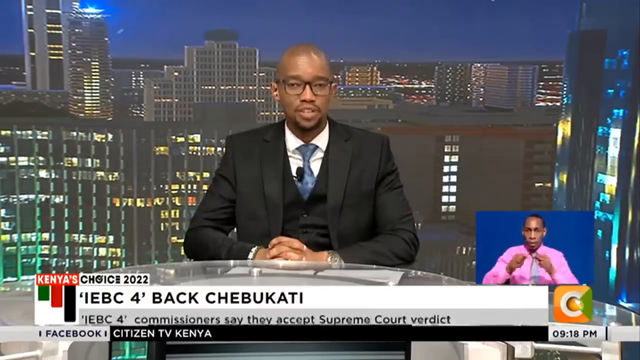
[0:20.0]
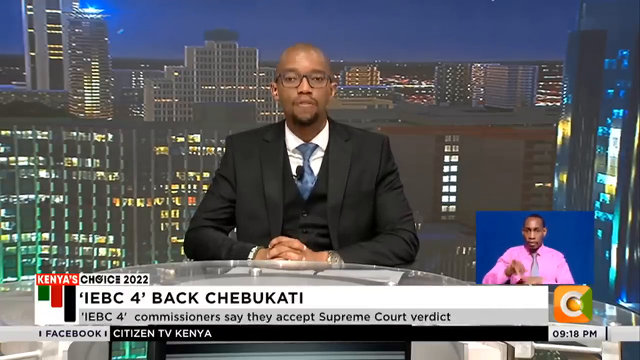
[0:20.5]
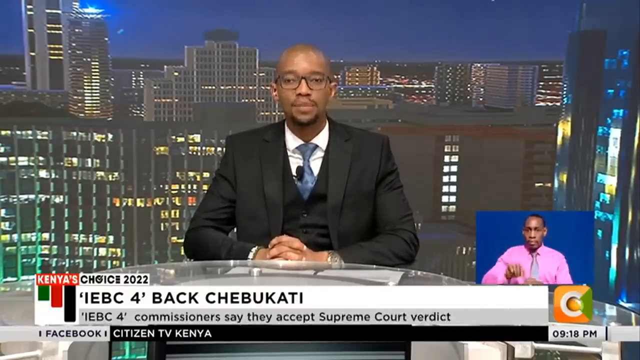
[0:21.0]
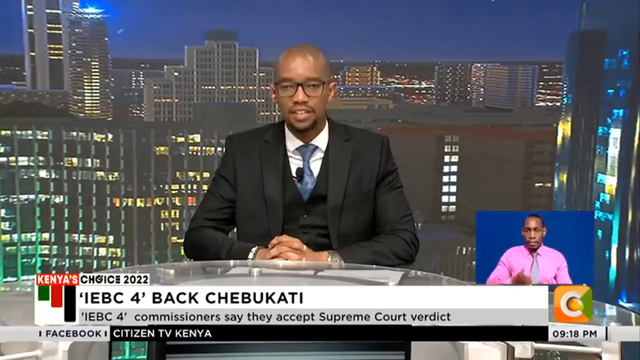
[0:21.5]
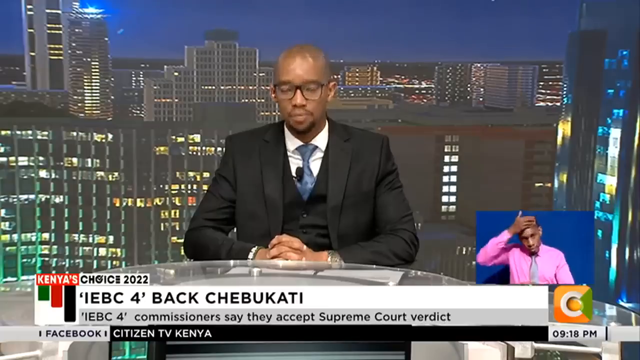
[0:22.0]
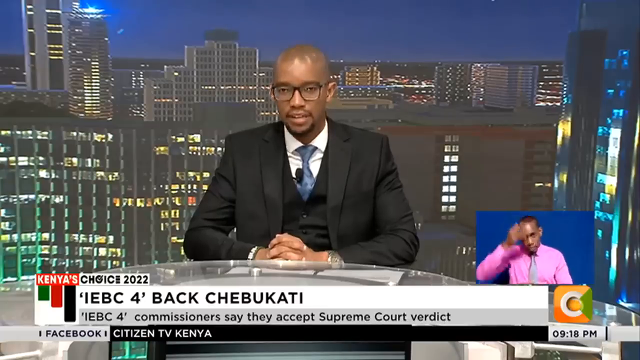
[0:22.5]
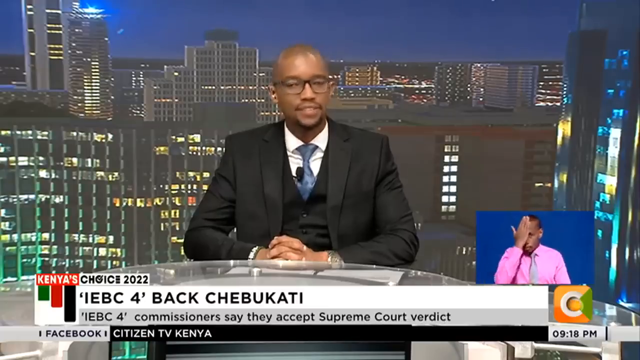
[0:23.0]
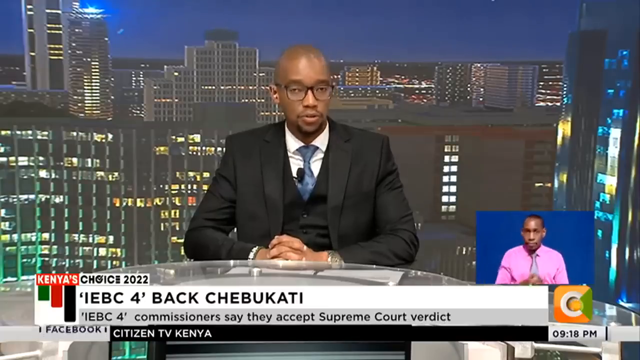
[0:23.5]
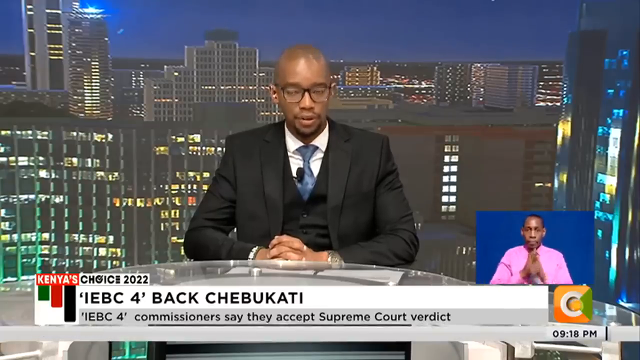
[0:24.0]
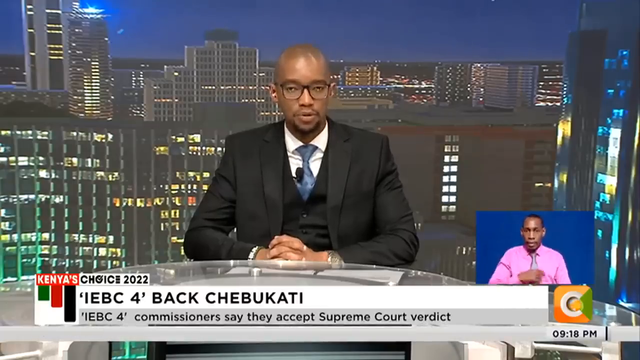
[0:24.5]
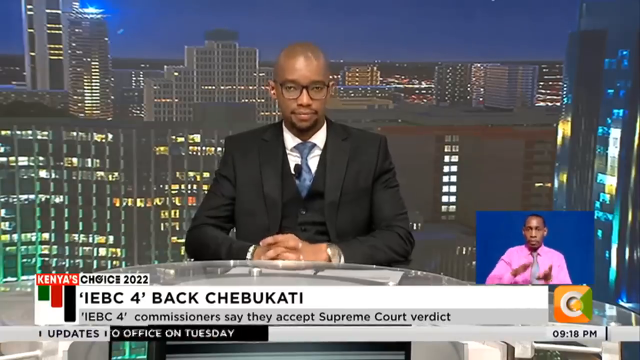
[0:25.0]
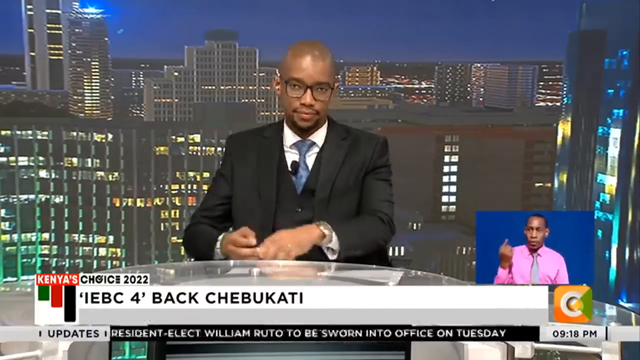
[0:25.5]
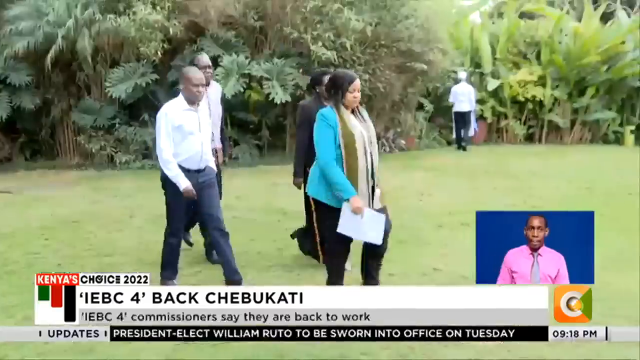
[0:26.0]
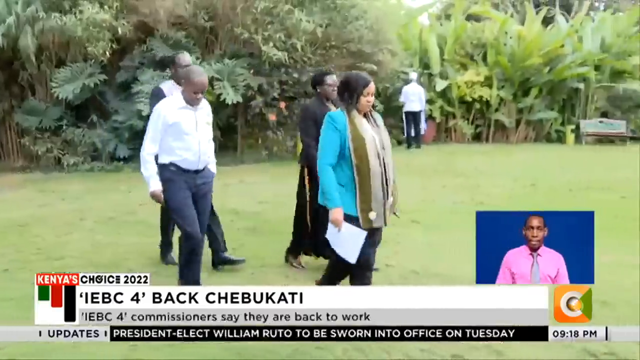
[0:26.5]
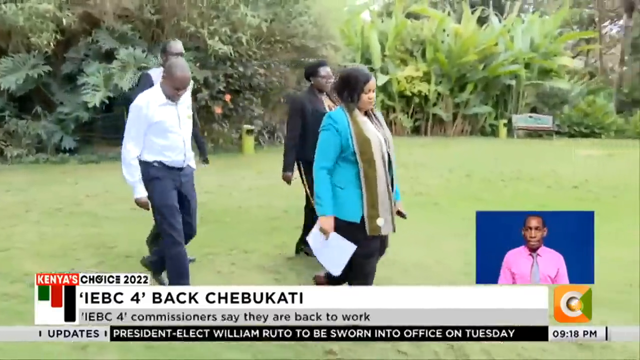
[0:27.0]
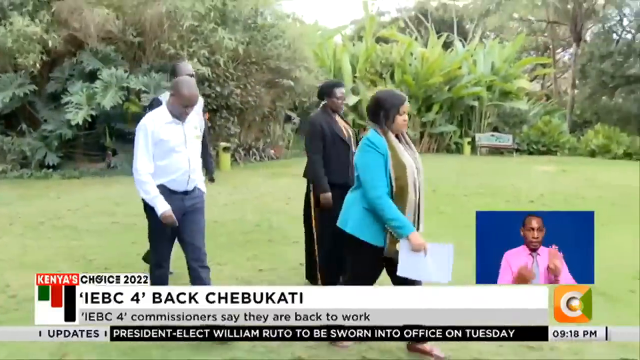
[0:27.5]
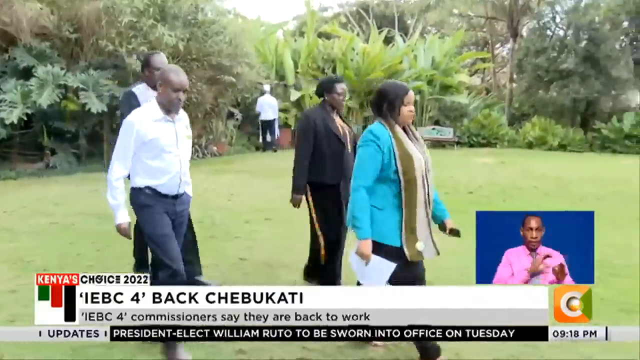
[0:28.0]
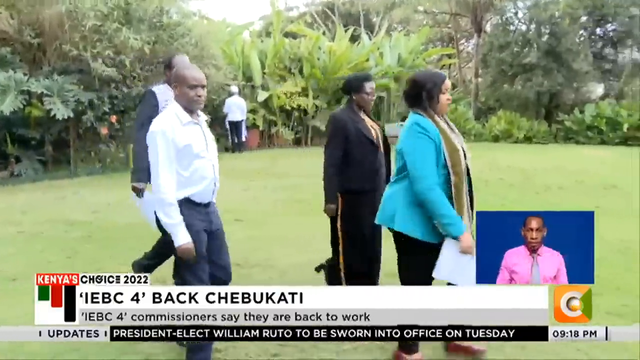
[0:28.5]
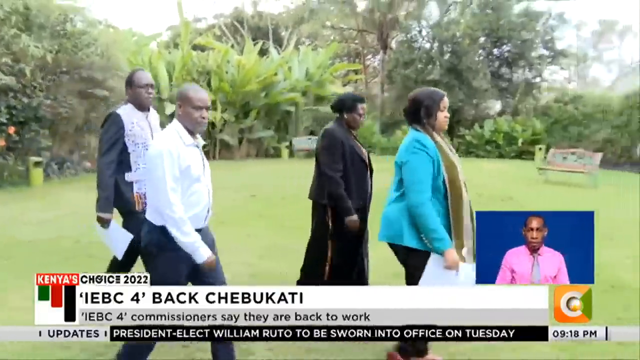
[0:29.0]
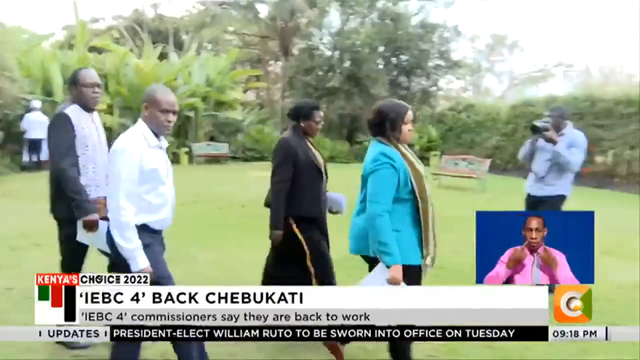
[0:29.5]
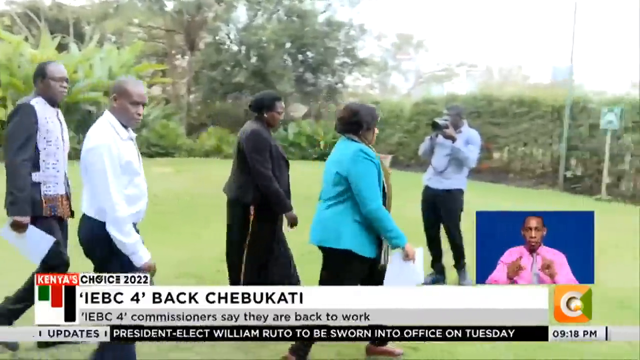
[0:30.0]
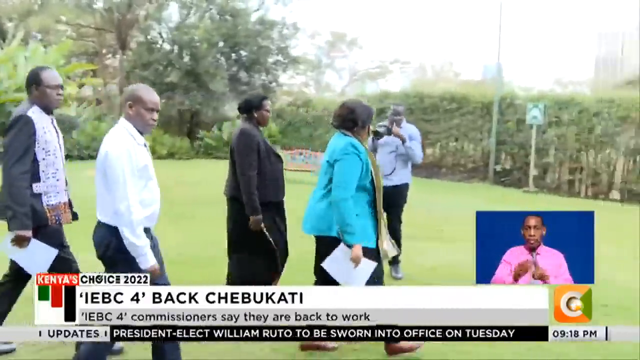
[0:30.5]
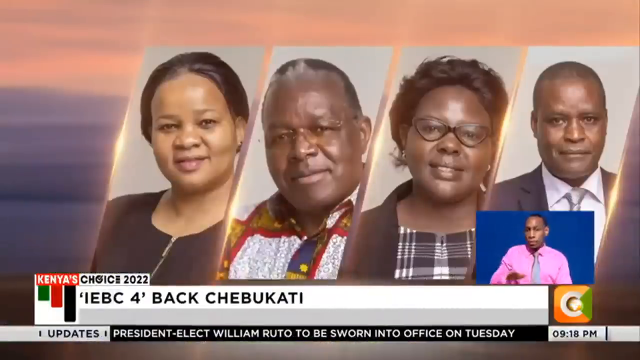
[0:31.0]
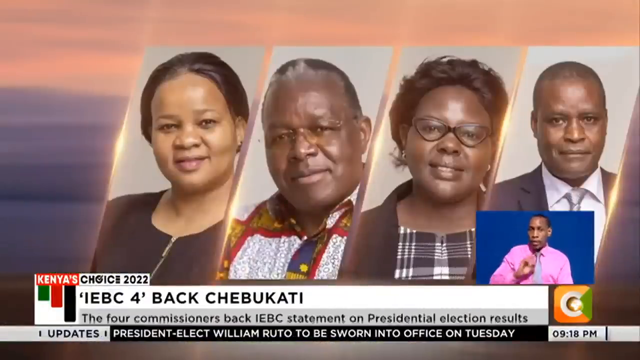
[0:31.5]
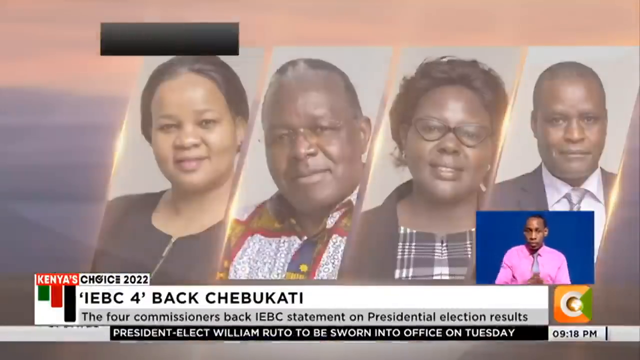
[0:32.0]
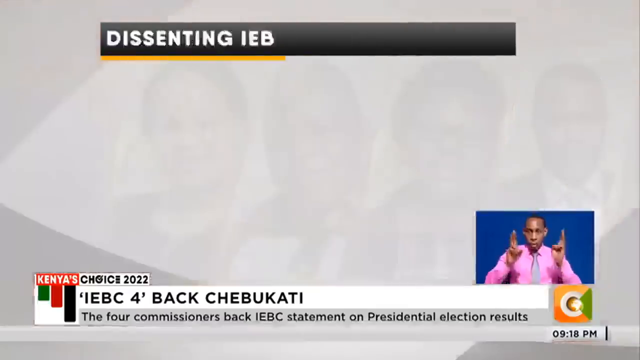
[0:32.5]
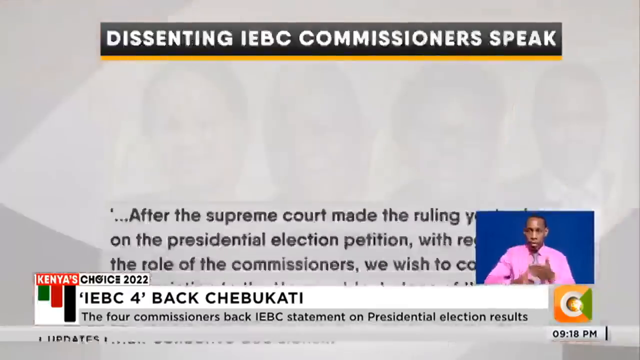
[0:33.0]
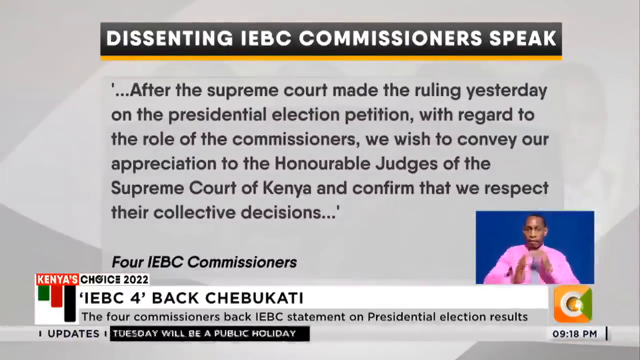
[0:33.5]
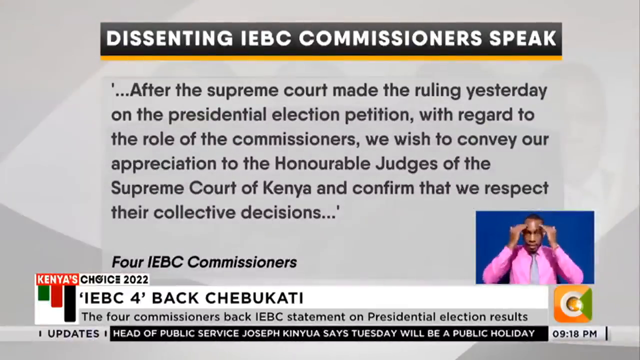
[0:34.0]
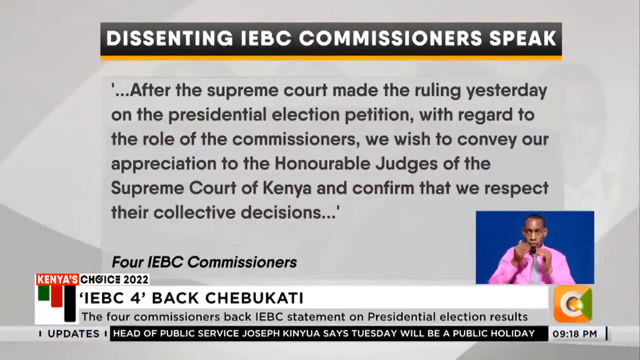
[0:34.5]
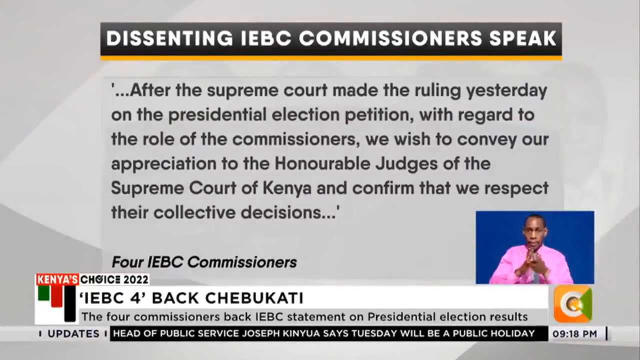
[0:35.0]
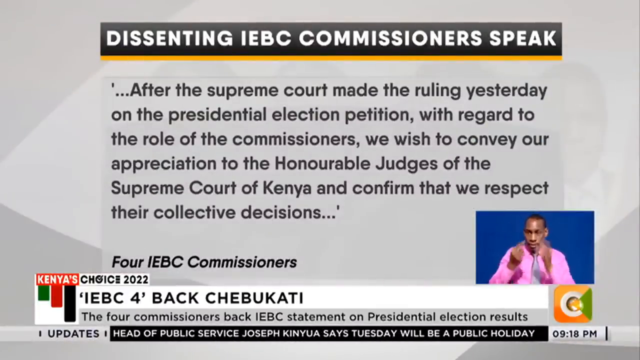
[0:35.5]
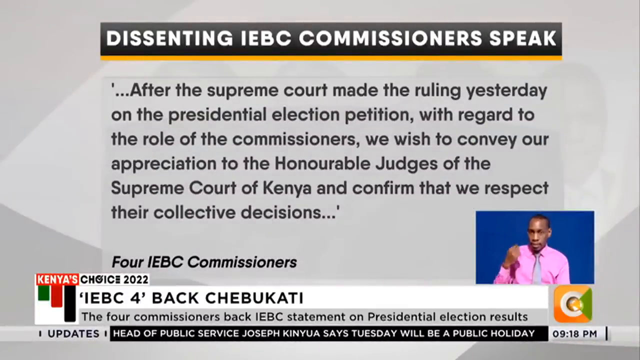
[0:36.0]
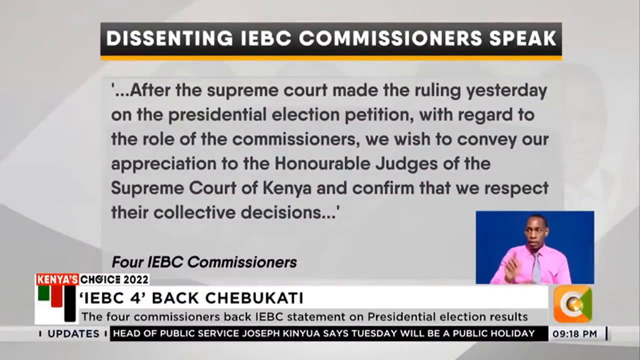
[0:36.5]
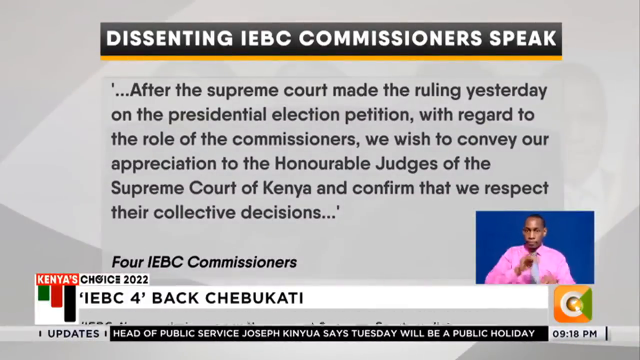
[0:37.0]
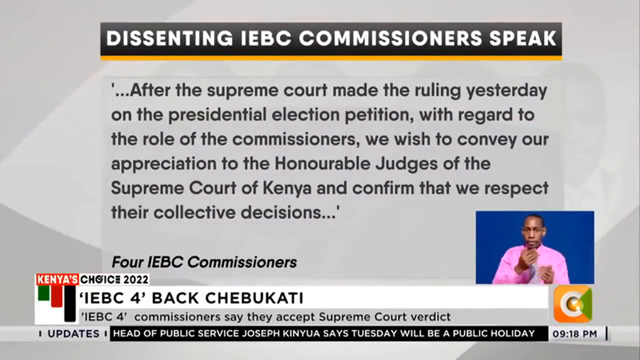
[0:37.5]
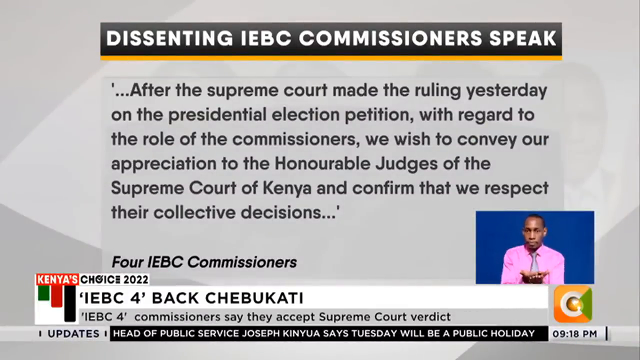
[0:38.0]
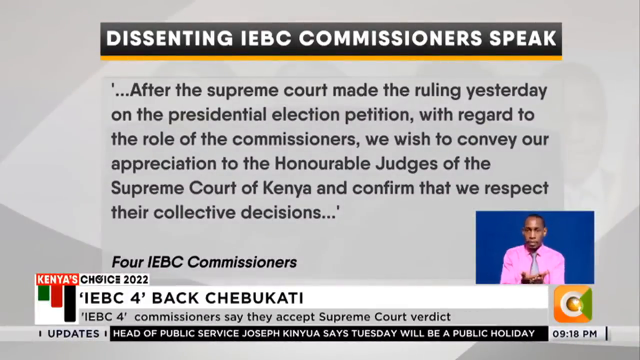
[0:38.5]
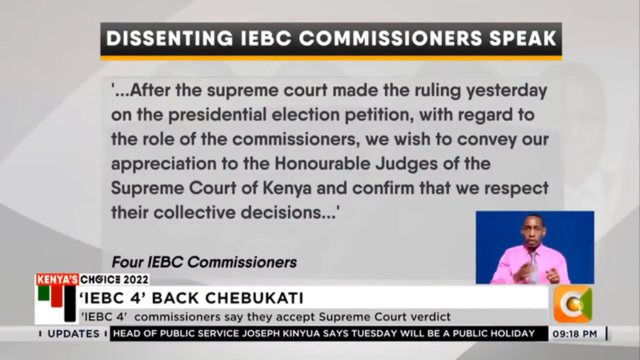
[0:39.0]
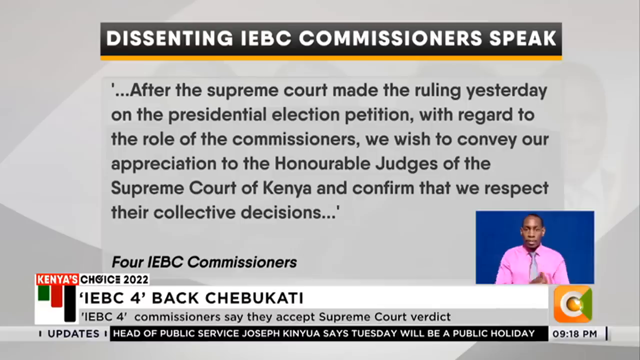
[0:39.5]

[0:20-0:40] The same news report continues. For a couple of seconds nothing visually changes as the man talks, and a man at the bottom right performs sign language for non-hearing viewers. After a couple of seconds, the report switches to video footage that seems to show a leader walking with subordinates. The leader looks like a lady in a bright turquoise color, walking in what is apparently some sort of yard. Next comes a screenshot of four different people side by side, followed by a quote about the Supreme Court's ruling from yesterday.